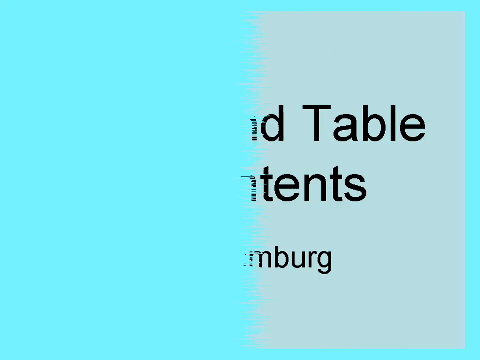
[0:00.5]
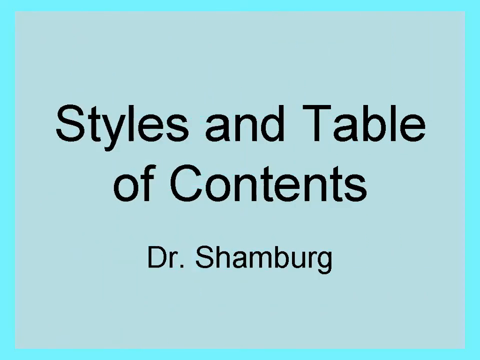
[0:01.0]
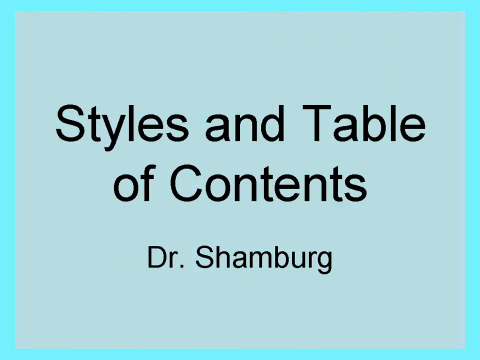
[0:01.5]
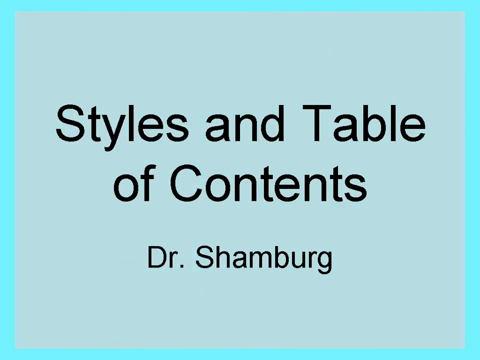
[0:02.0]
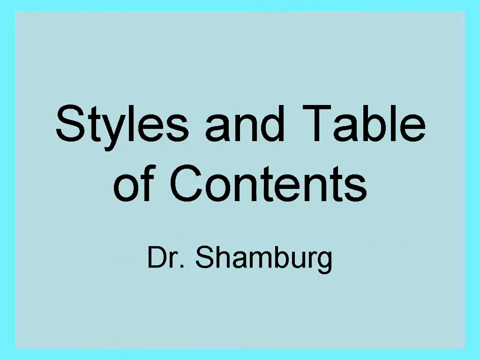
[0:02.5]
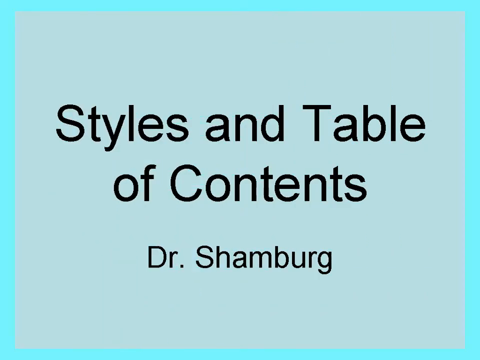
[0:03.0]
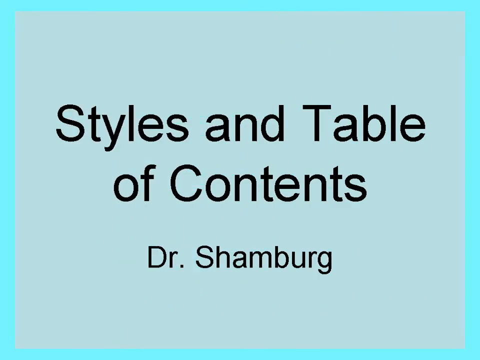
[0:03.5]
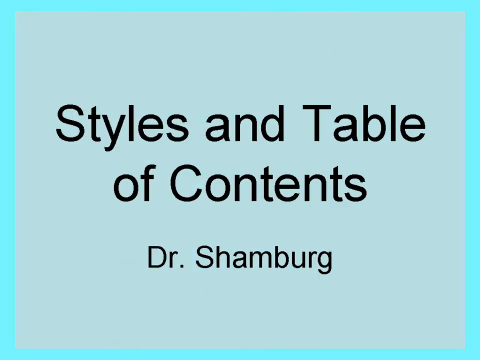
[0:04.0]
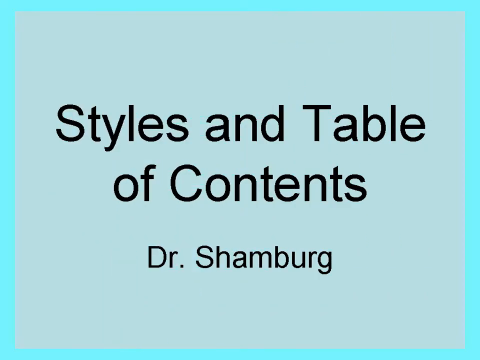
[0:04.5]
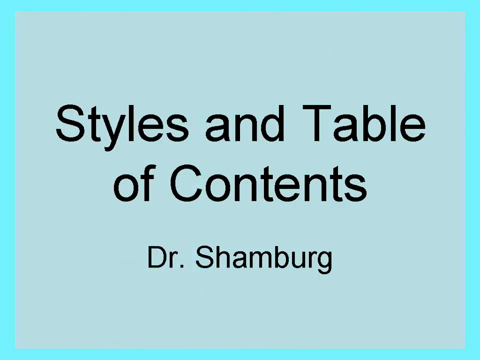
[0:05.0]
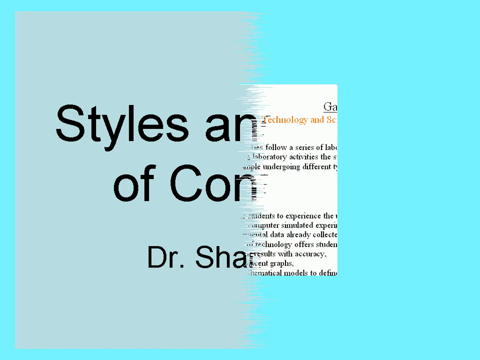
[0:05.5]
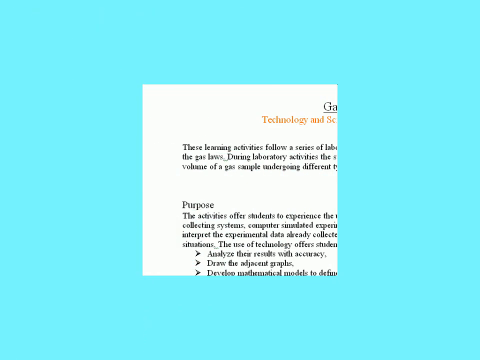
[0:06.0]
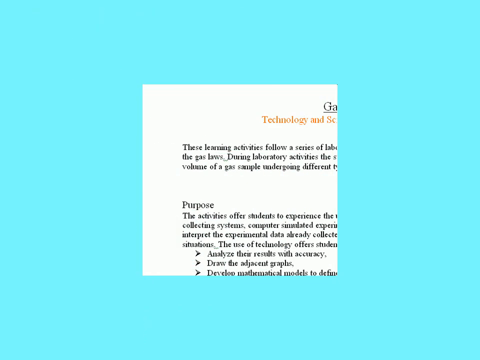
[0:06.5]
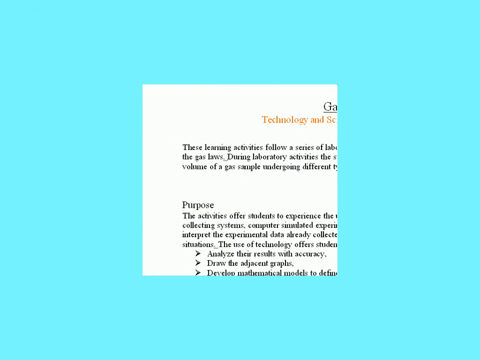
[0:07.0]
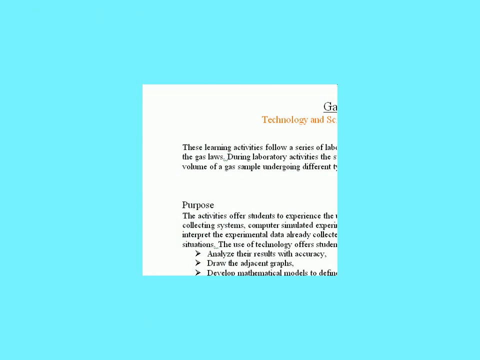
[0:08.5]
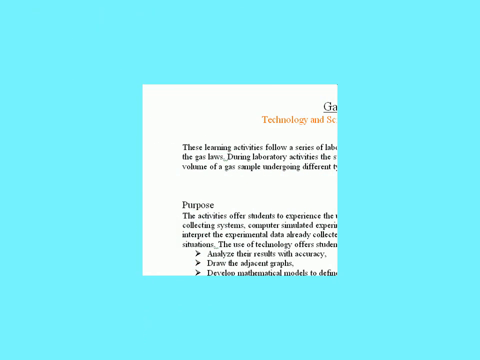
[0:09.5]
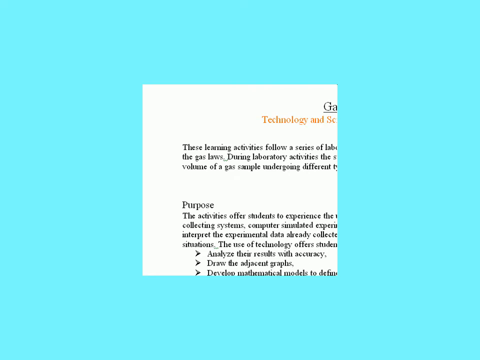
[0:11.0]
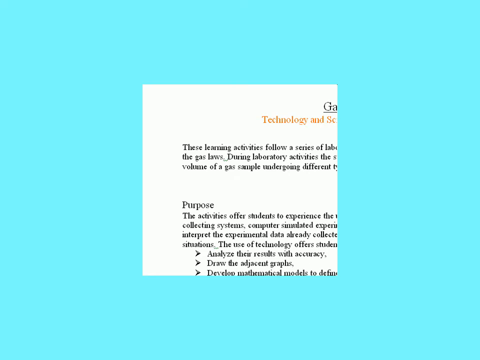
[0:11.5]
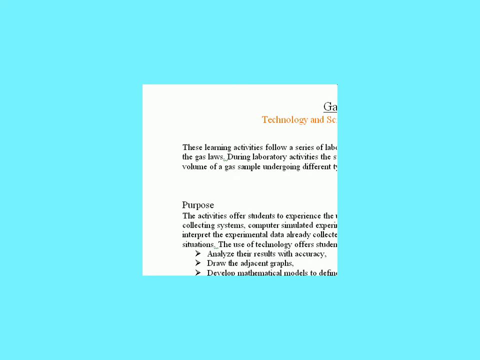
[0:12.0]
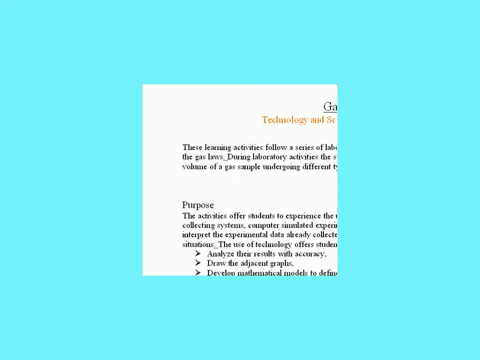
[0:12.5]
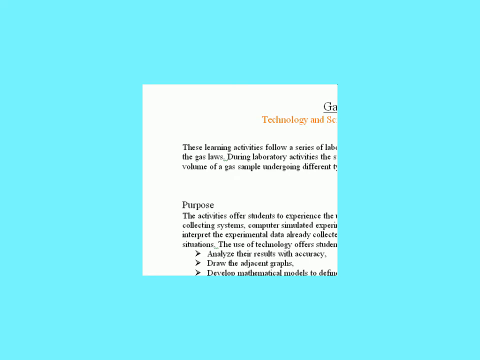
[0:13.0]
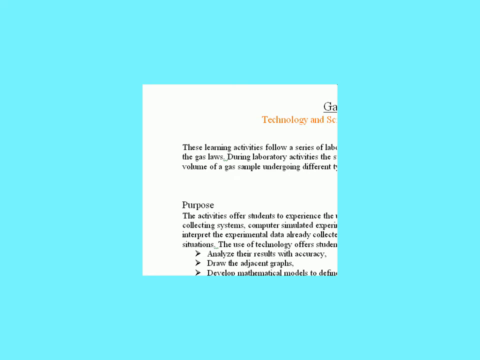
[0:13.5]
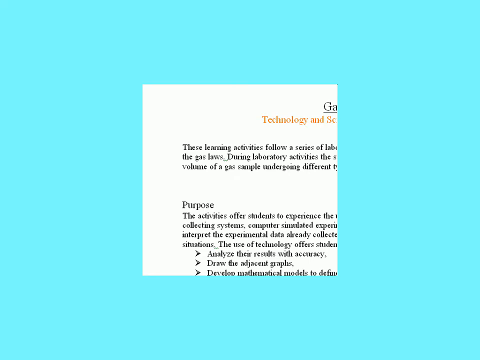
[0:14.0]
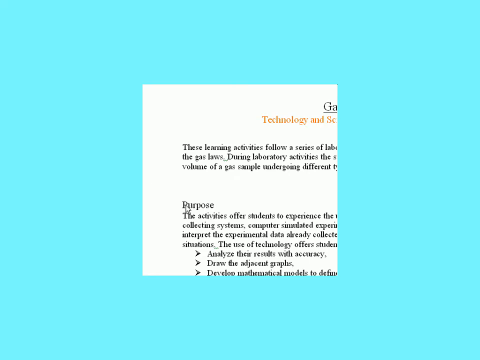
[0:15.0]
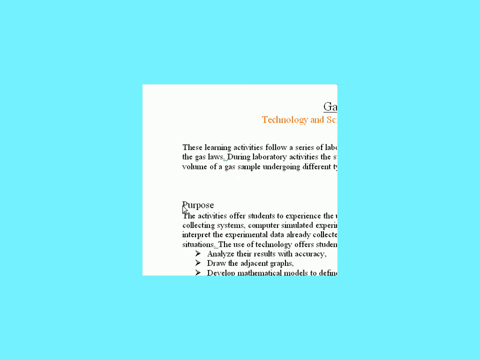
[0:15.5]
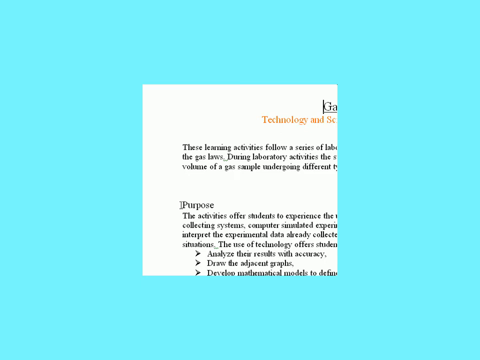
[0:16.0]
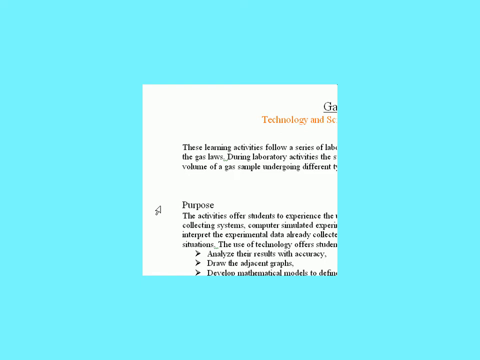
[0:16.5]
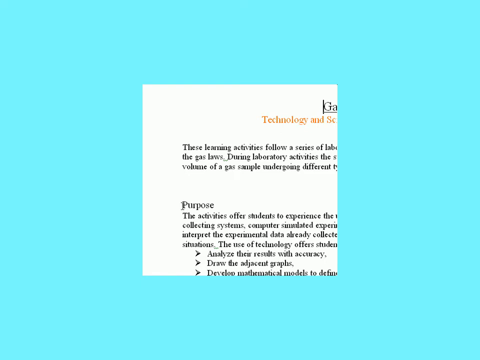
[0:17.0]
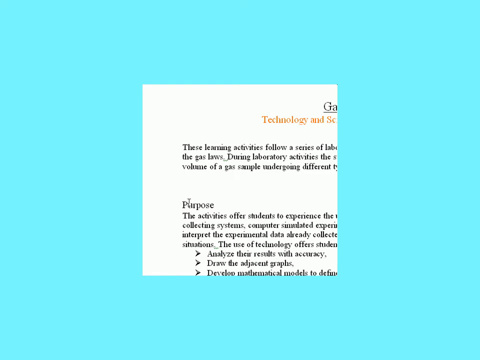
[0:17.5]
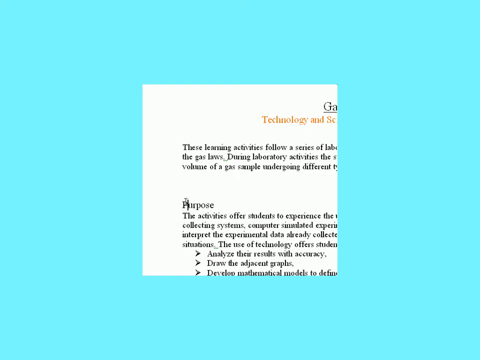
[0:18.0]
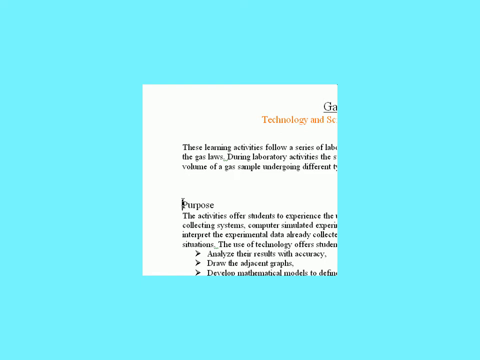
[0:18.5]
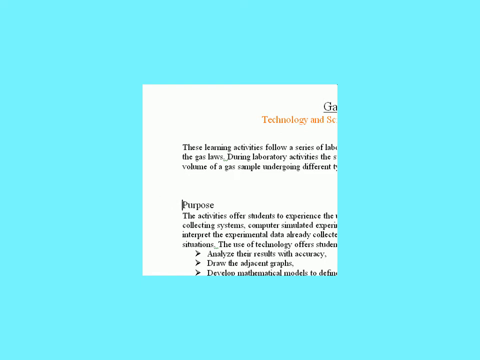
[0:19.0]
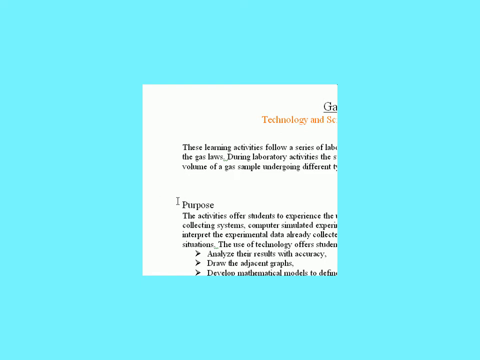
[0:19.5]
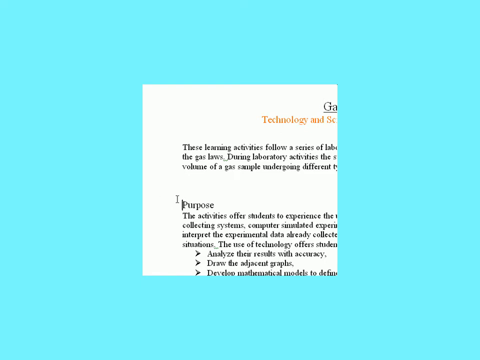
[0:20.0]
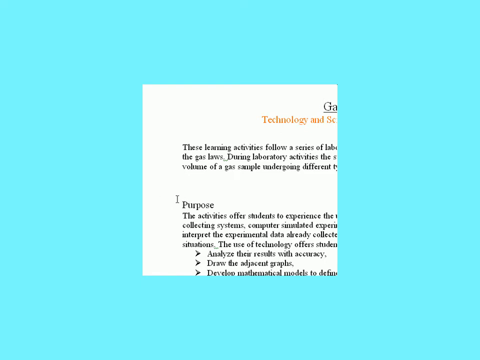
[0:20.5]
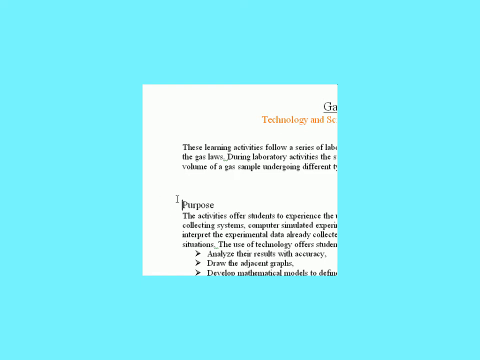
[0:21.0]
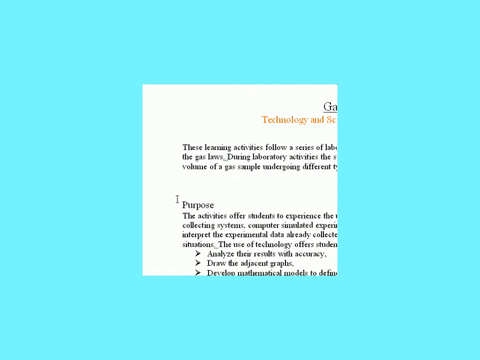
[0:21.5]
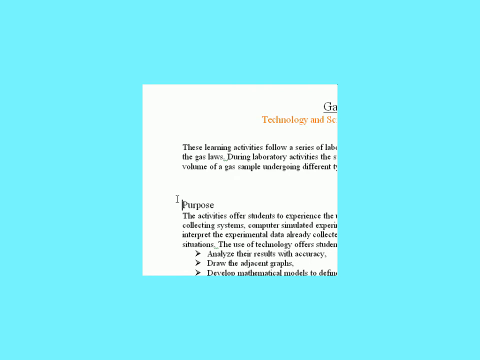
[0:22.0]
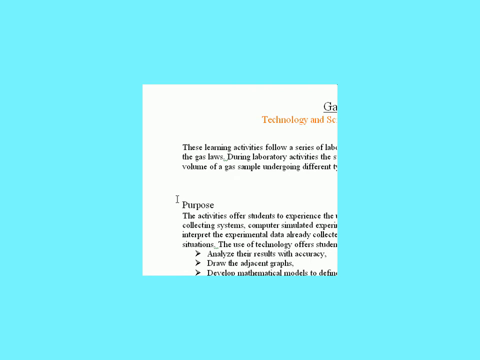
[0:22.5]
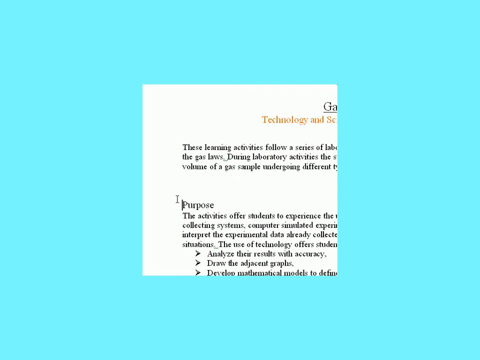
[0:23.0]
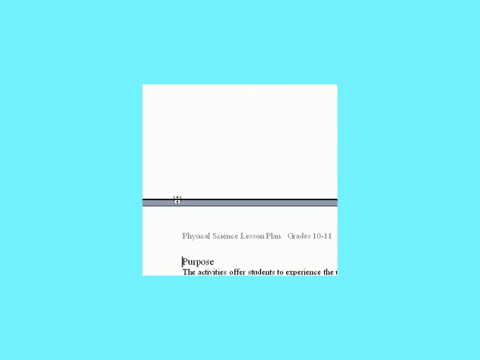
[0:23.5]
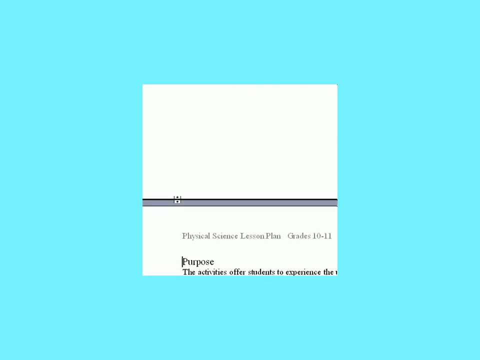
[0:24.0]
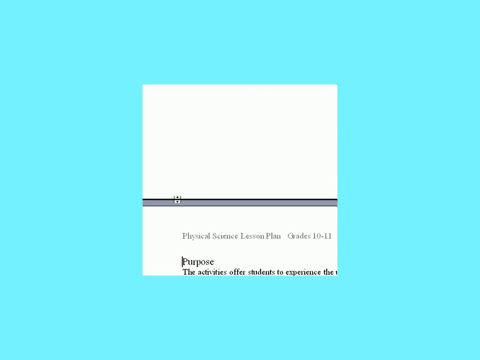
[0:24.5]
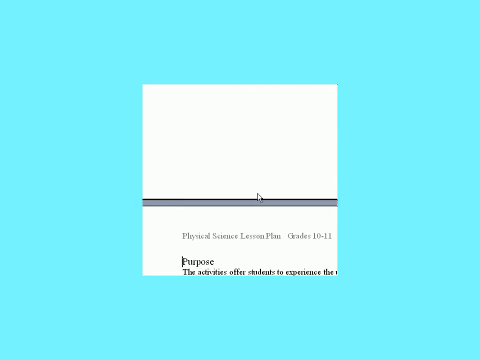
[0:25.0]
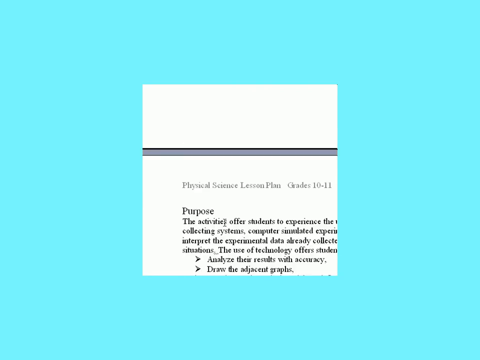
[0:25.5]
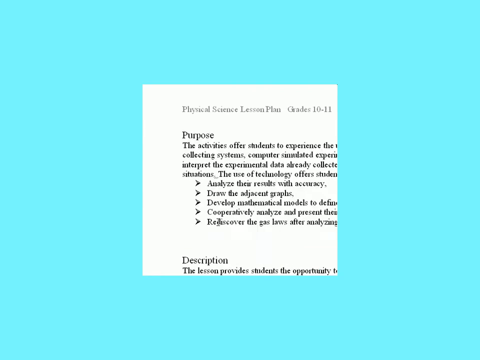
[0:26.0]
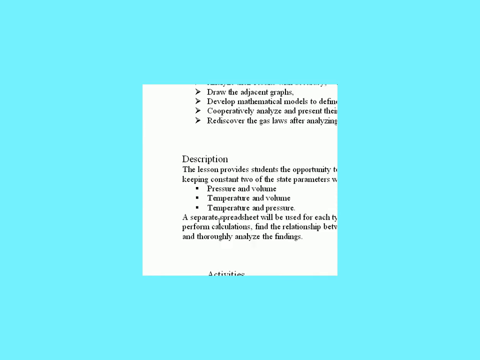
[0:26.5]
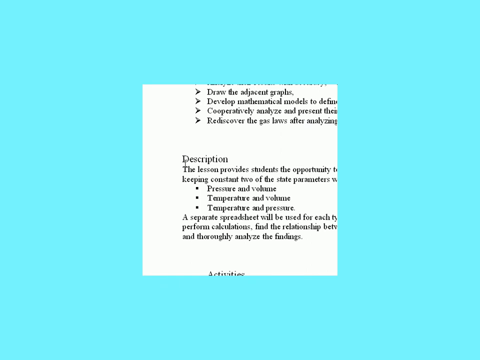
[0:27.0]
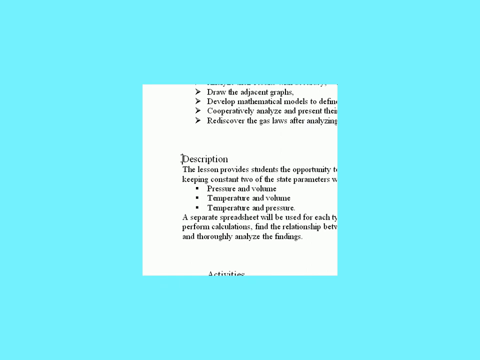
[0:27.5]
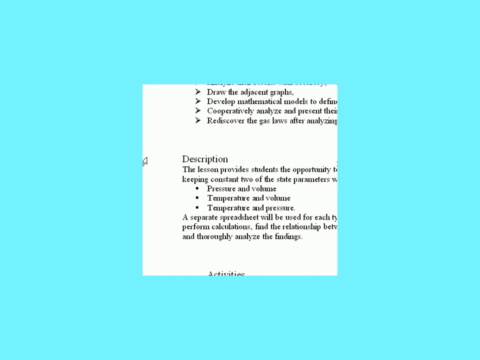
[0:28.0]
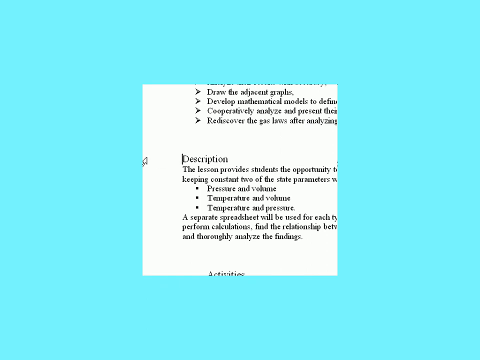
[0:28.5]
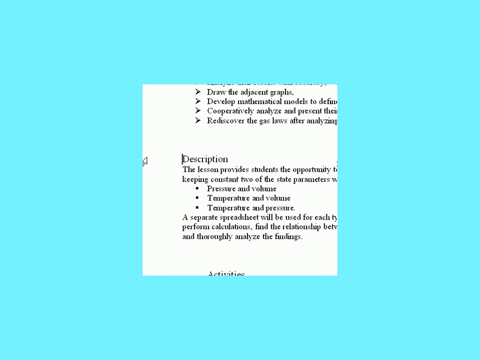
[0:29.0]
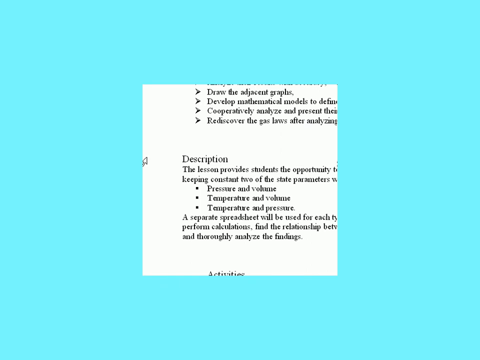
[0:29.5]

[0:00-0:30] A table of contents by Dr Schoenberg appears. It looks blue with a grey colour inside. The letters are small, and the page shows the purpose and the activities. A person is busy editing something they are writing. The screen then turns to a blank blue.